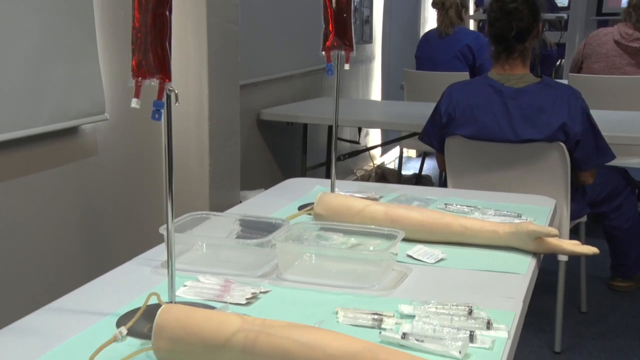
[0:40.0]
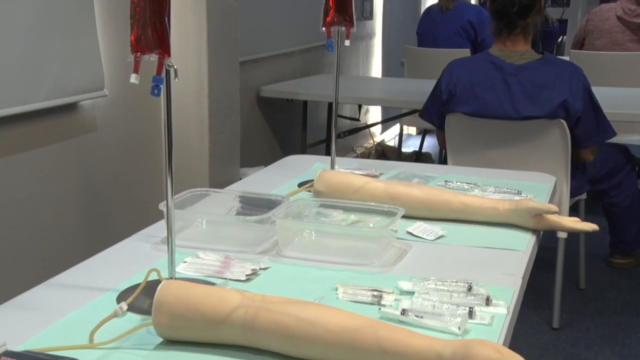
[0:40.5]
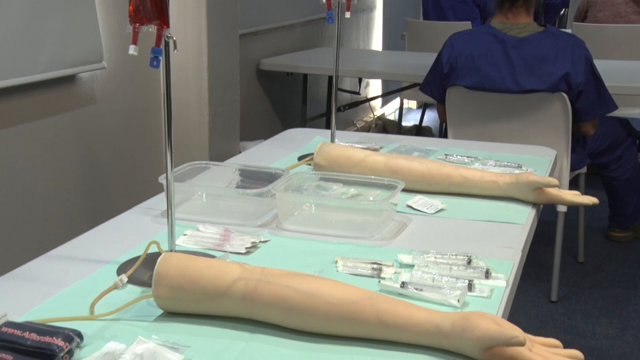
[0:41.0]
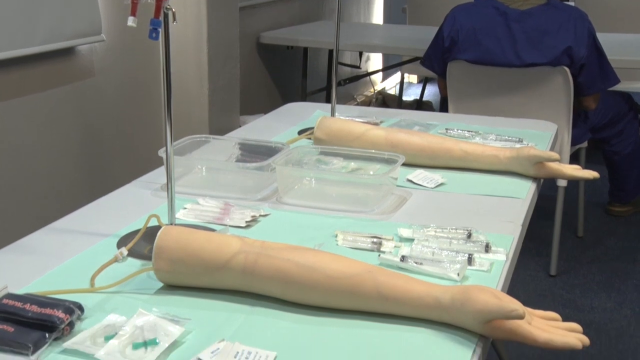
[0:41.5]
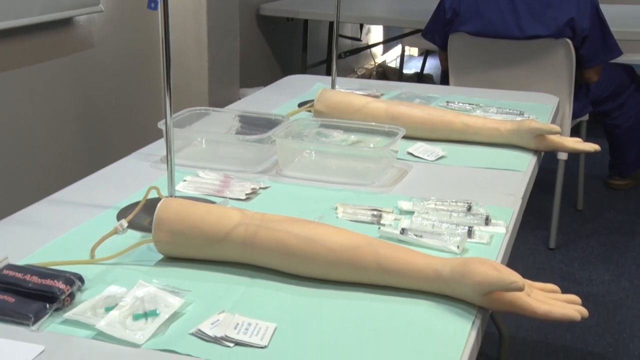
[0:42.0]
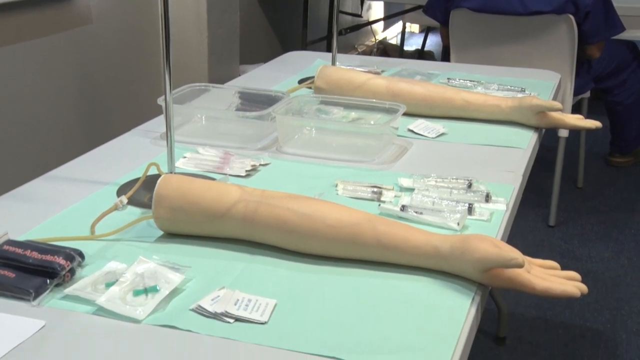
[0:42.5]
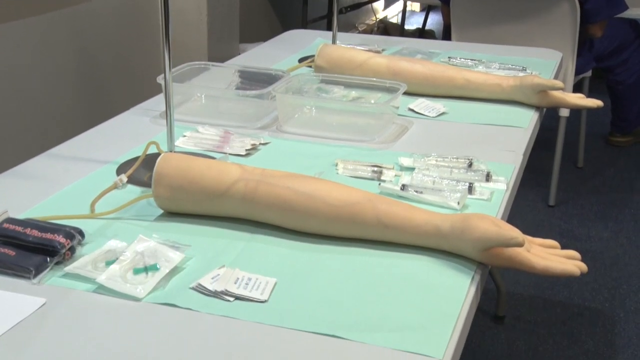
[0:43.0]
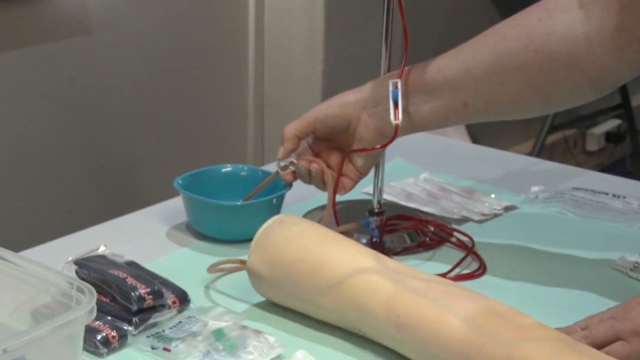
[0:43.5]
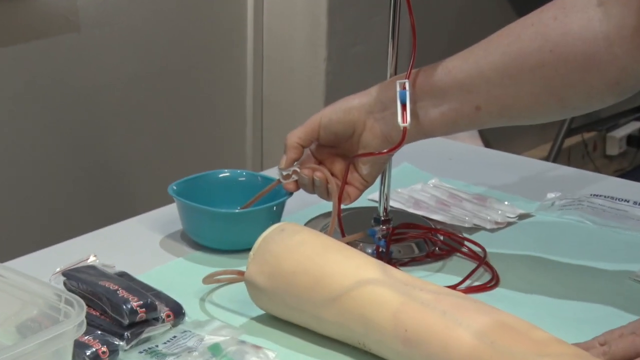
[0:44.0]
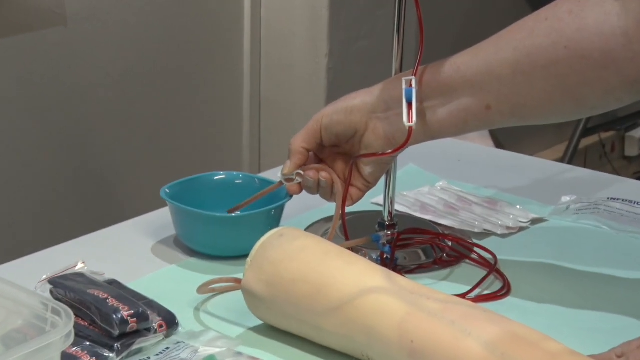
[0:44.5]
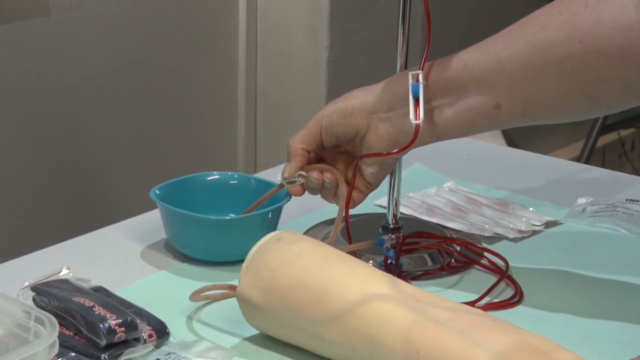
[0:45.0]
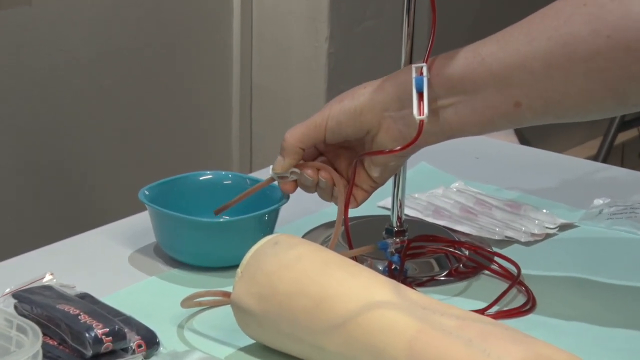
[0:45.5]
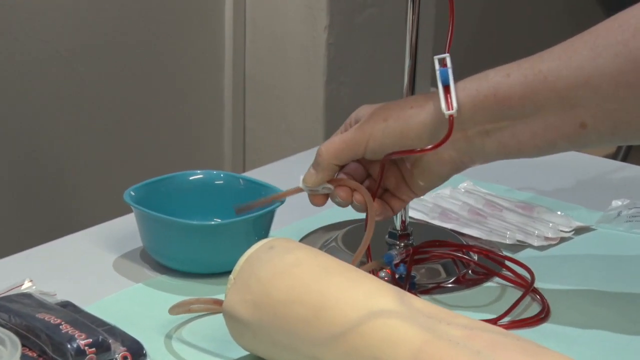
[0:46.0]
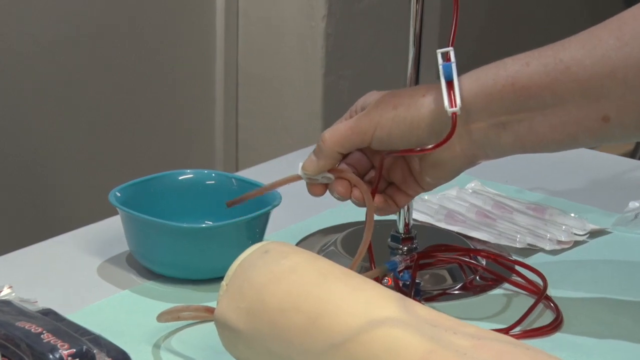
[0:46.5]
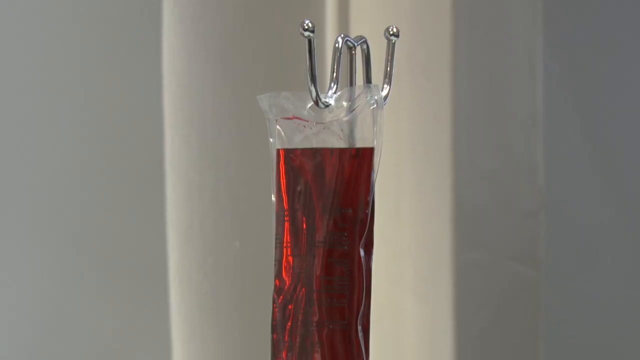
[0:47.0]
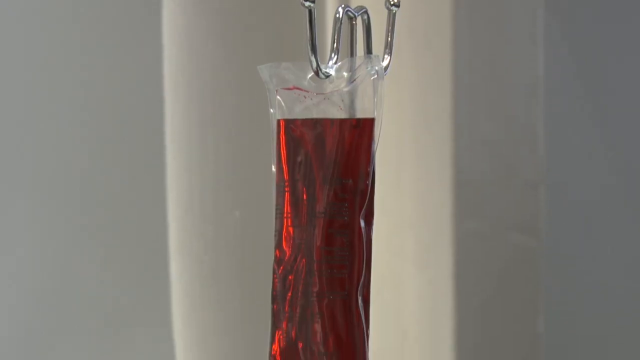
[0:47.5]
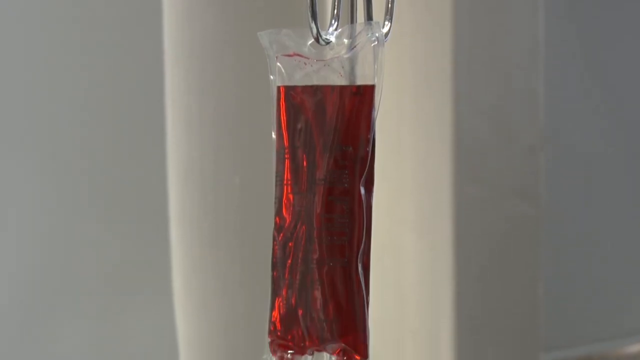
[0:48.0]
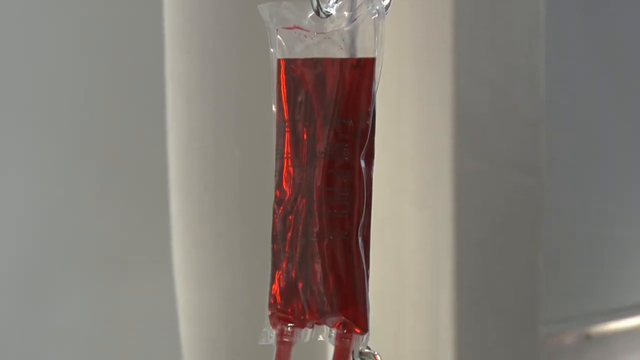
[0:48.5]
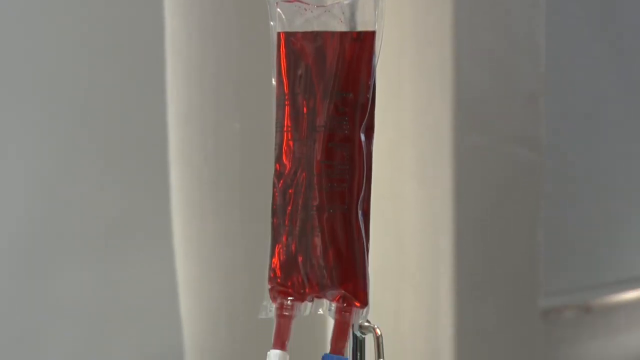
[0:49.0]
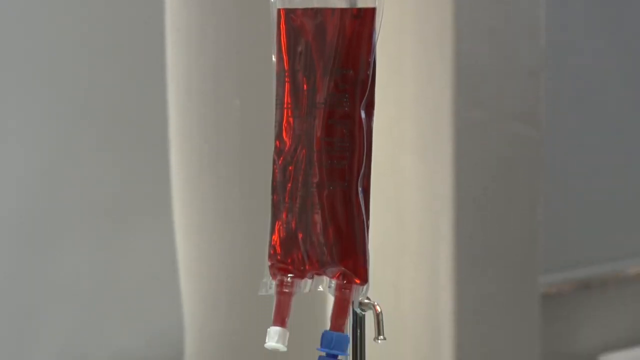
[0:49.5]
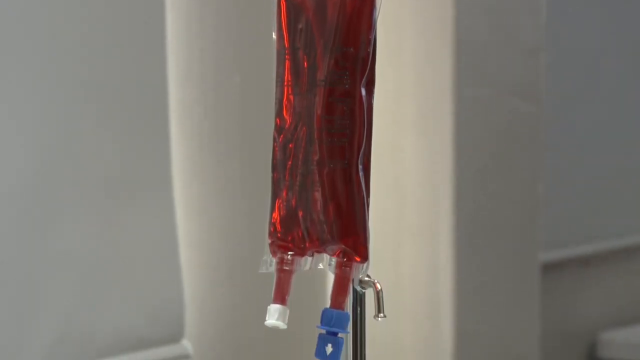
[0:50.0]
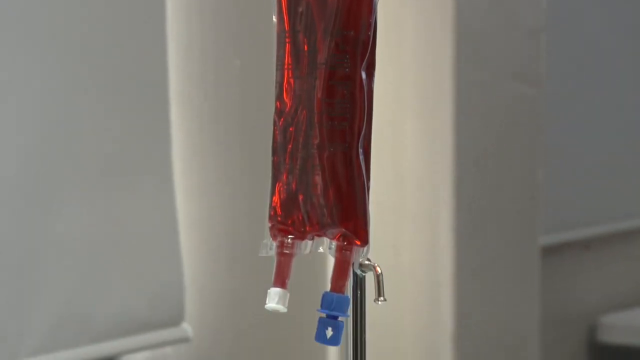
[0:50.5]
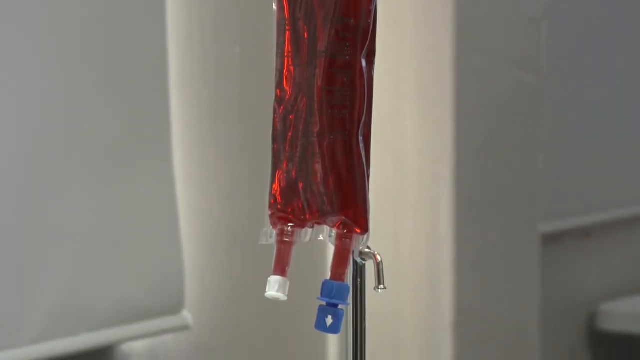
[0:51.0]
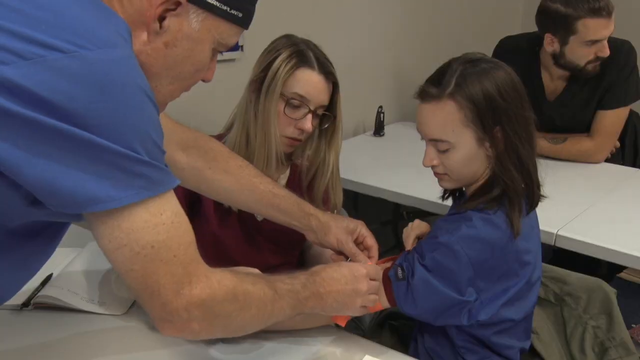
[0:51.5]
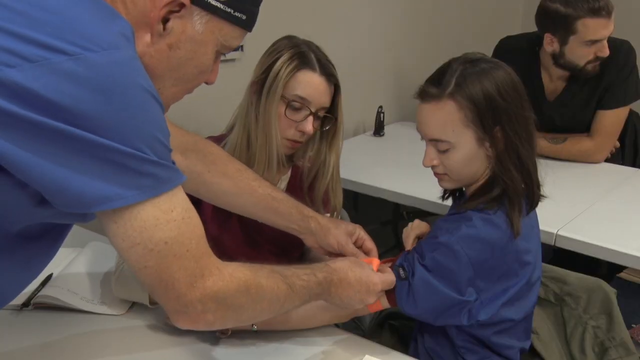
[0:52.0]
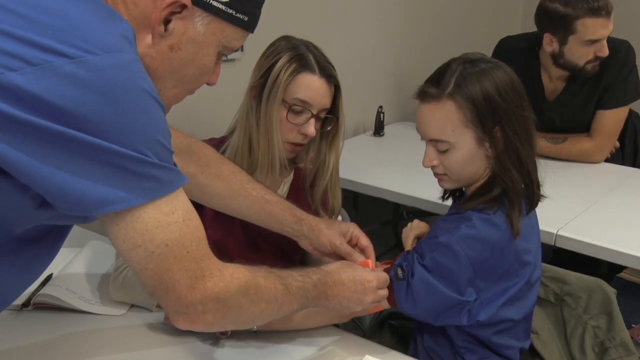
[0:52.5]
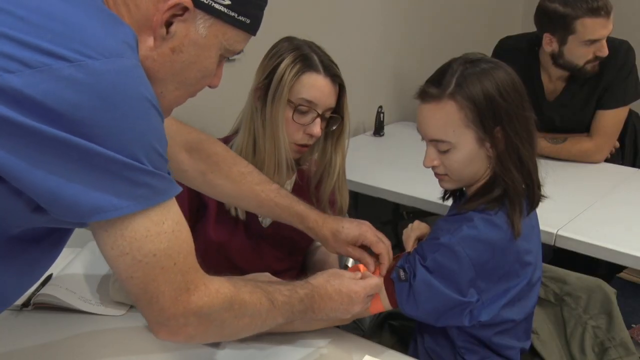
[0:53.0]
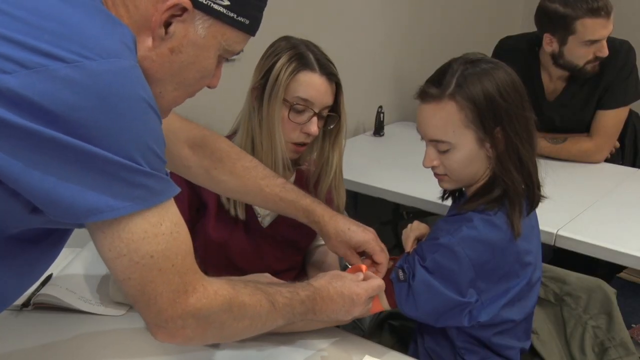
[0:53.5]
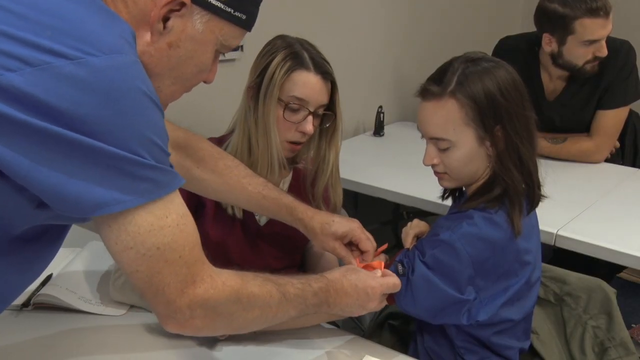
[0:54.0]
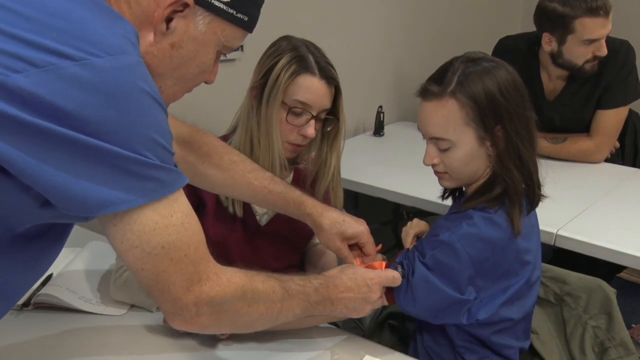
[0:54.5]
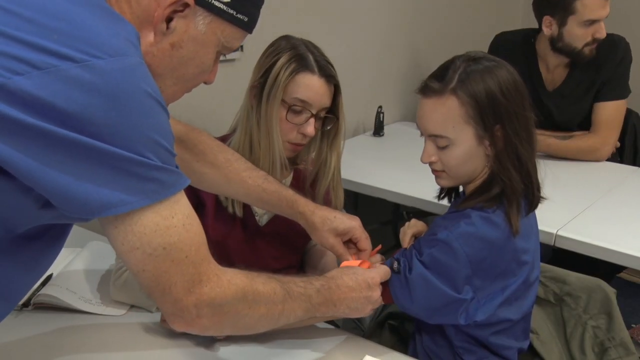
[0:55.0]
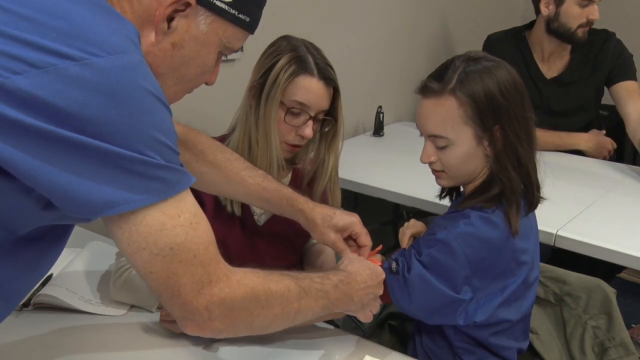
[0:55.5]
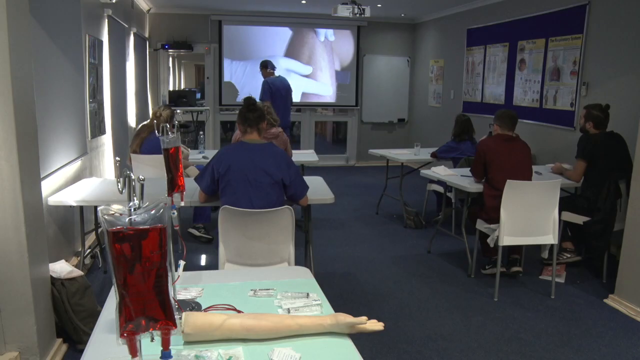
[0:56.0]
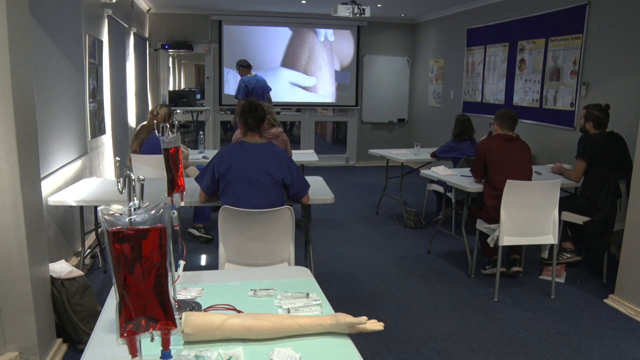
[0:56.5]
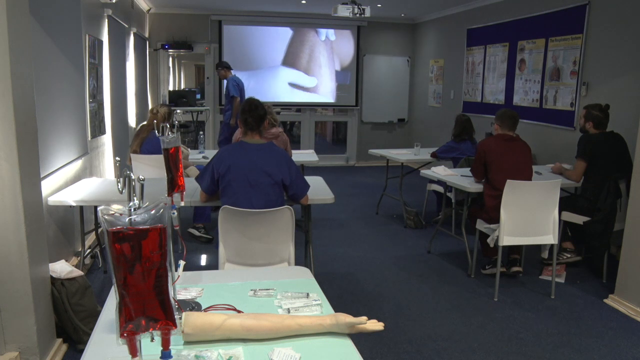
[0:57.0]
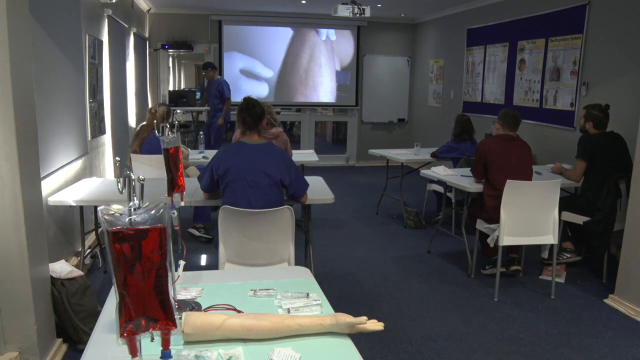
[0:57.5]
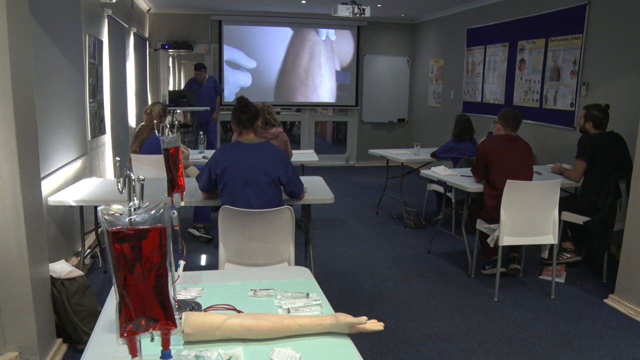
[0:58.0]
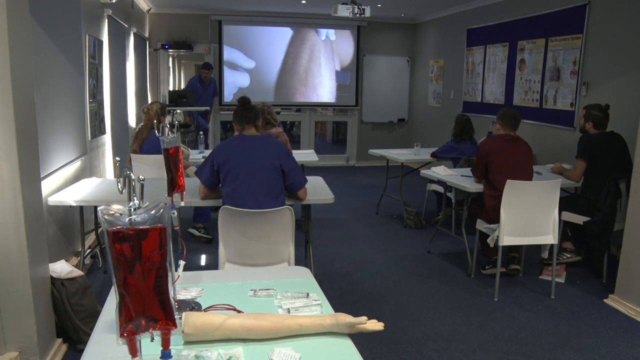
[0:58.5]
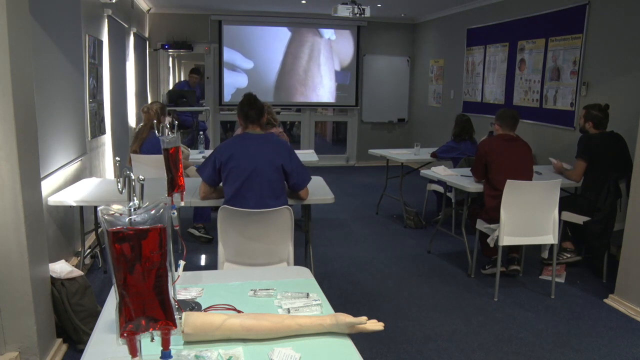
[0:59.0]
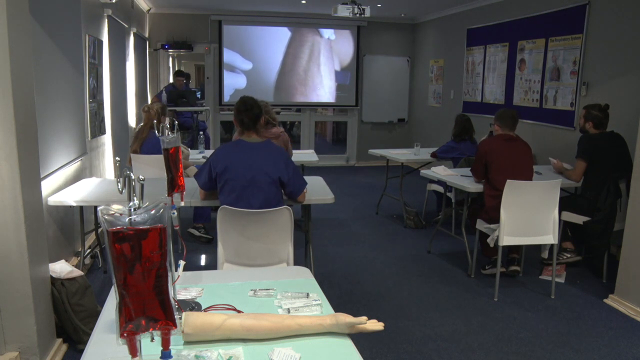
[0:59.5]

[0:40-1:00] A small table is set up in what looks to be the back of a classroom, with the backs of a few students visible as they sit at long desks facing forward. On the small table are a few medical supplies such as syringes and disinfectants, two dummy model arms that look like an arm from above the elbow to the fingertips, and bags of blood. In a close-up, someone's hand holds a skinny reddish tube that seems to have blood coming through it and squeezes the end of it into a small teal plastic bowl, squeezing a little and then shaking the end off on the side of the bowl. Next is a close-up of a clear bag that looks like it has blood in it, hanging from a skinny silver rod; the camera starts at the top of the bag and pans downward. In what looks like a classroom, two female students sit at one desk with a male student at another desk behind them, and the instructor appears to be helping one of the female students tie a large neon pink rubber band around her bicep while the other female student looks on. The scene changes to a wider shot of the classroom from an angle at the back. The professor walks to his little podium off to the side, and a video showing some type of medical procedure plays in the background.